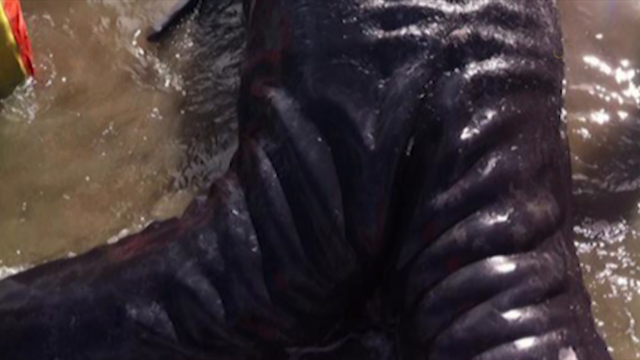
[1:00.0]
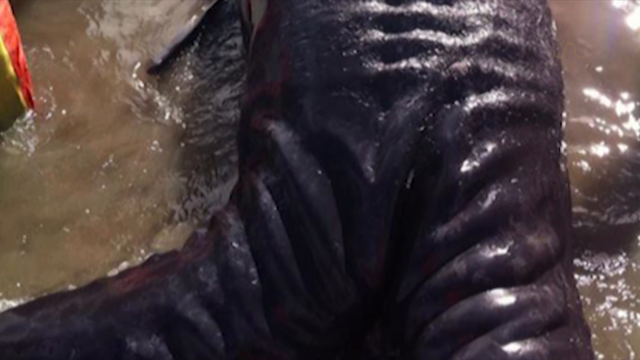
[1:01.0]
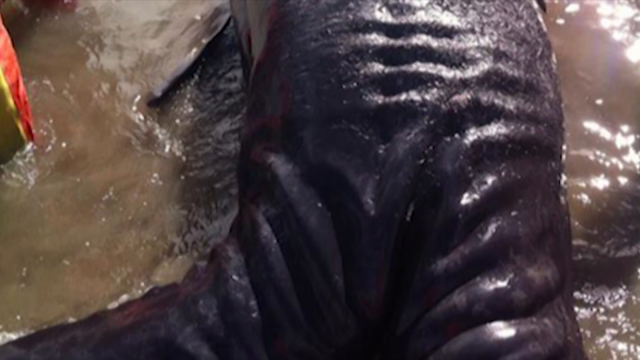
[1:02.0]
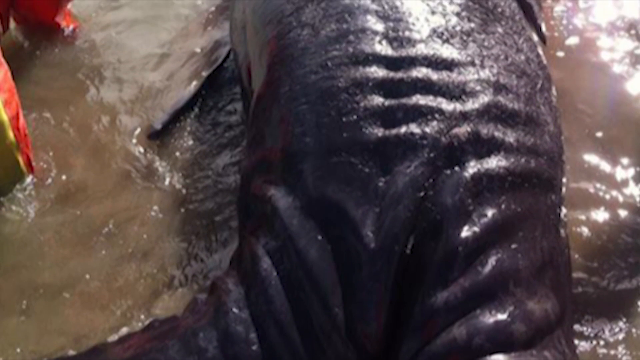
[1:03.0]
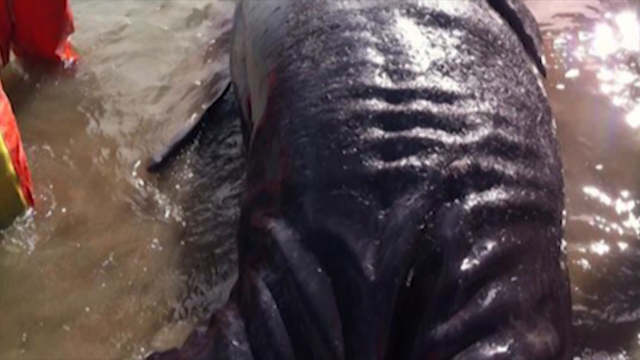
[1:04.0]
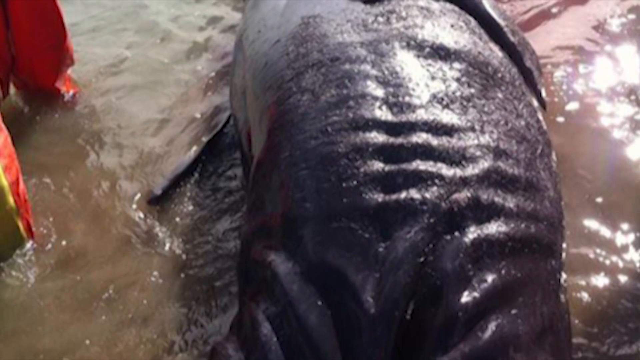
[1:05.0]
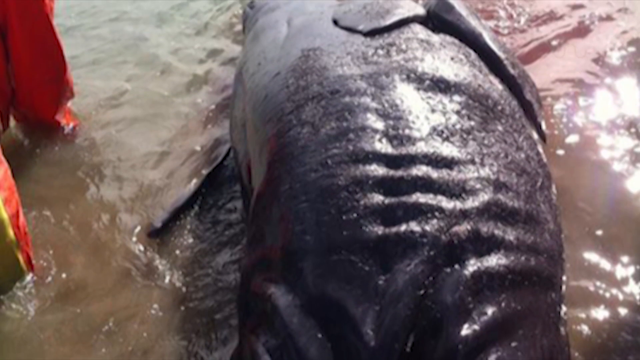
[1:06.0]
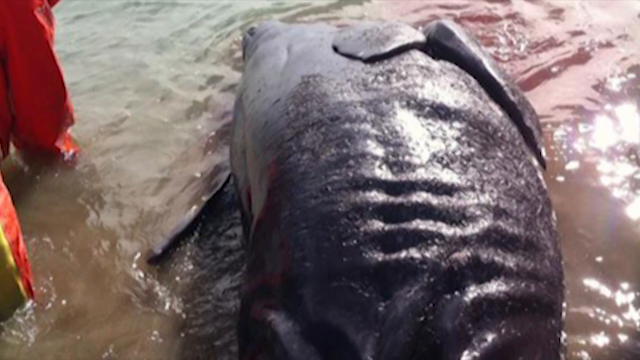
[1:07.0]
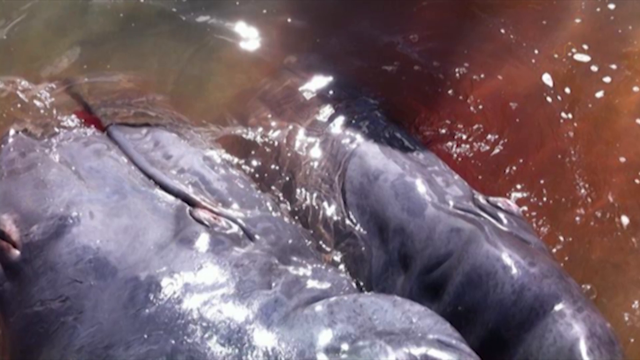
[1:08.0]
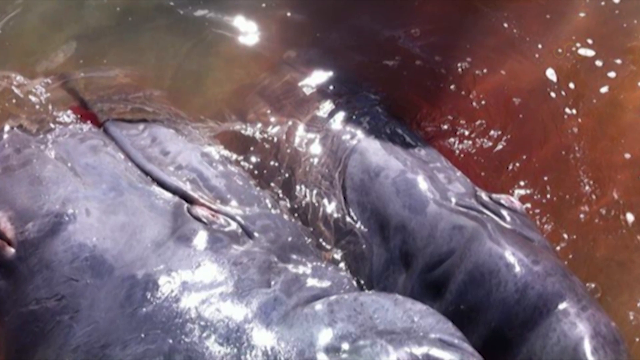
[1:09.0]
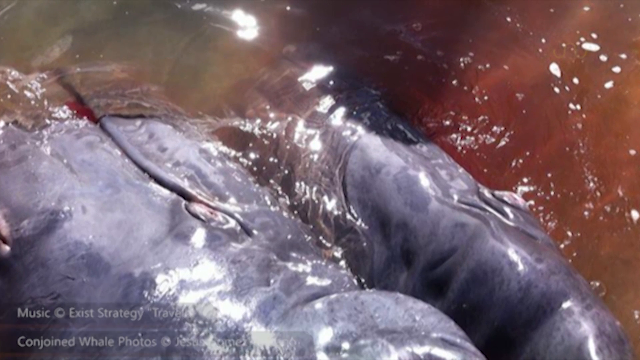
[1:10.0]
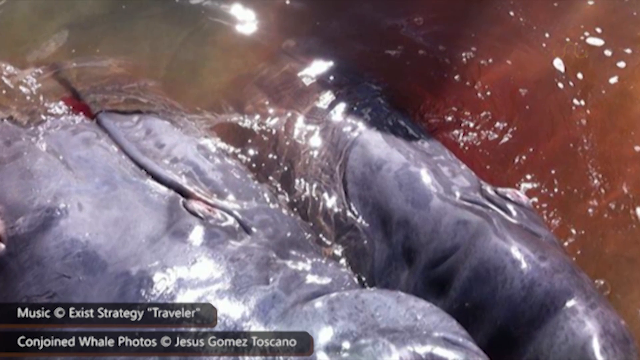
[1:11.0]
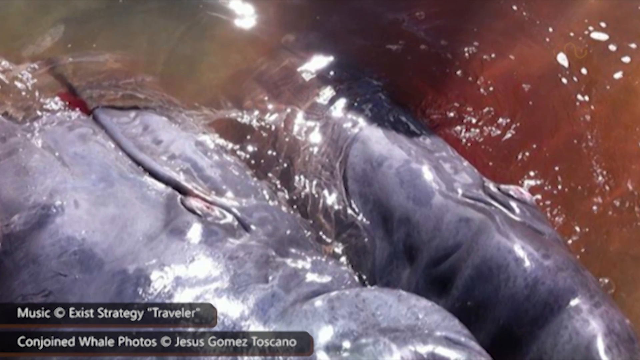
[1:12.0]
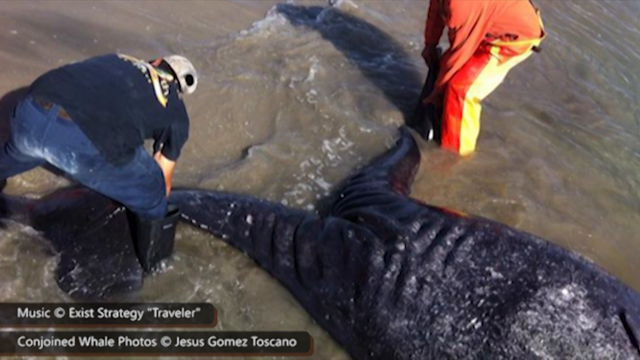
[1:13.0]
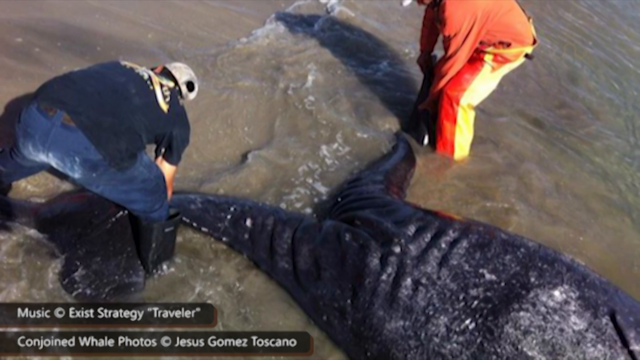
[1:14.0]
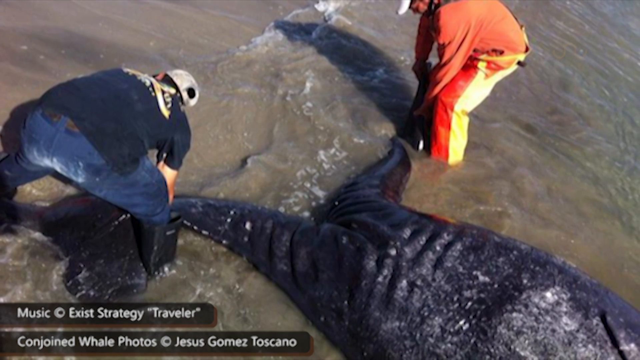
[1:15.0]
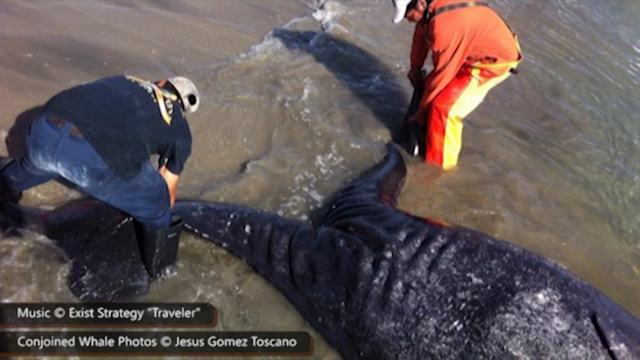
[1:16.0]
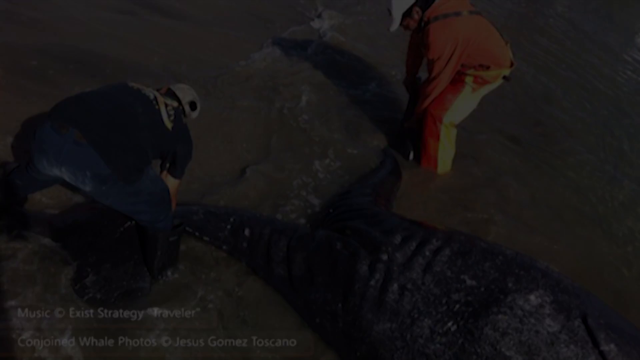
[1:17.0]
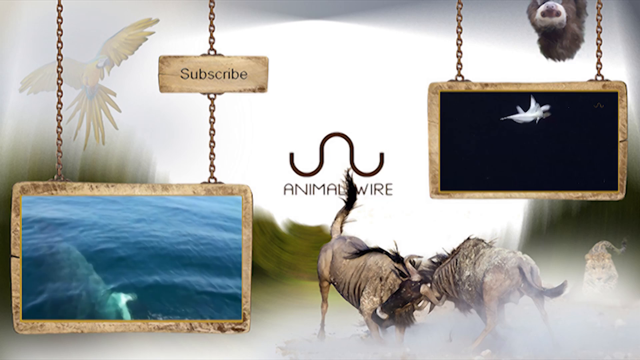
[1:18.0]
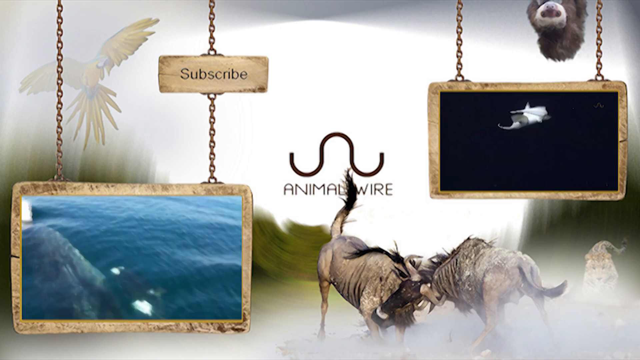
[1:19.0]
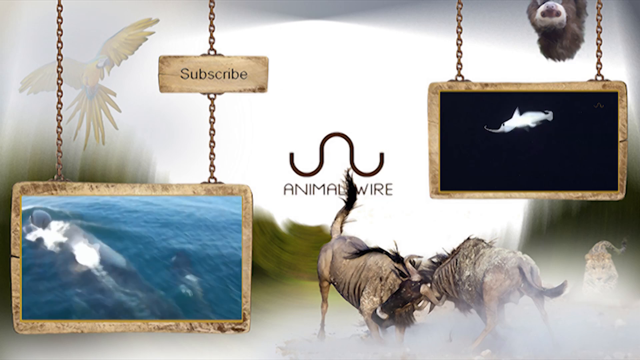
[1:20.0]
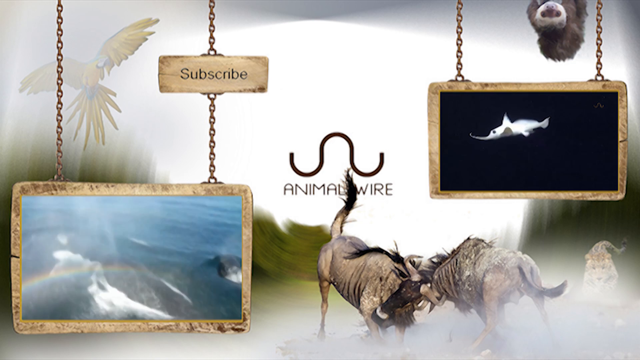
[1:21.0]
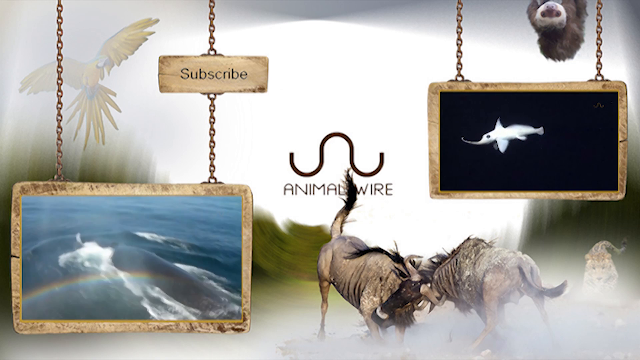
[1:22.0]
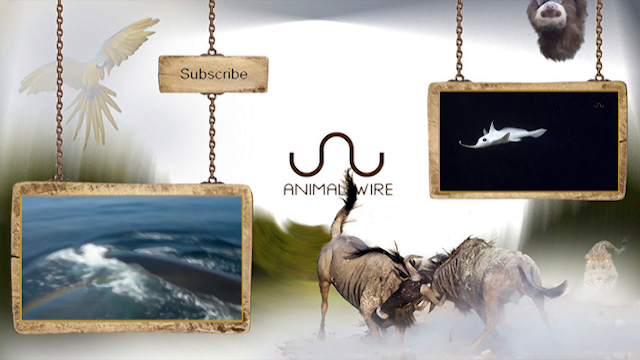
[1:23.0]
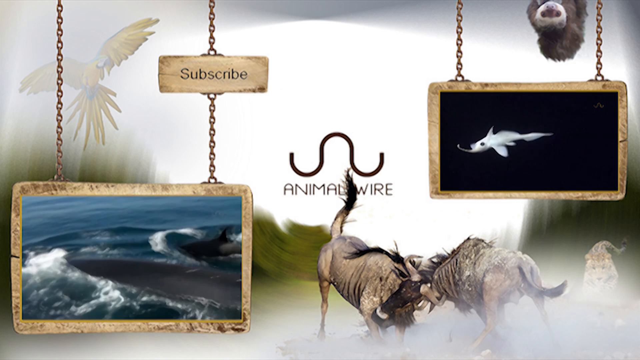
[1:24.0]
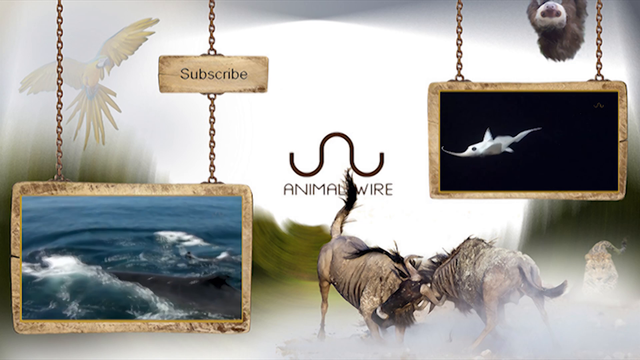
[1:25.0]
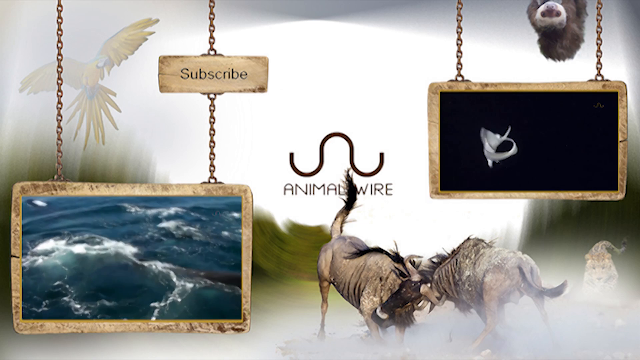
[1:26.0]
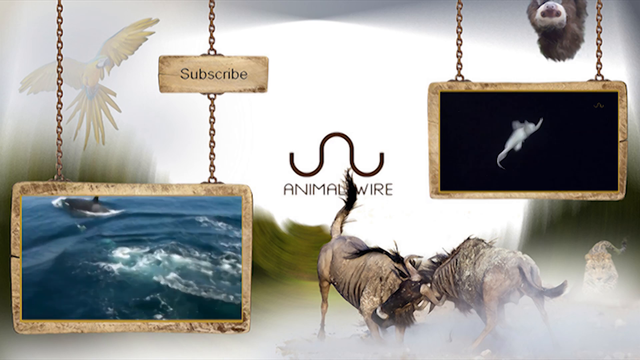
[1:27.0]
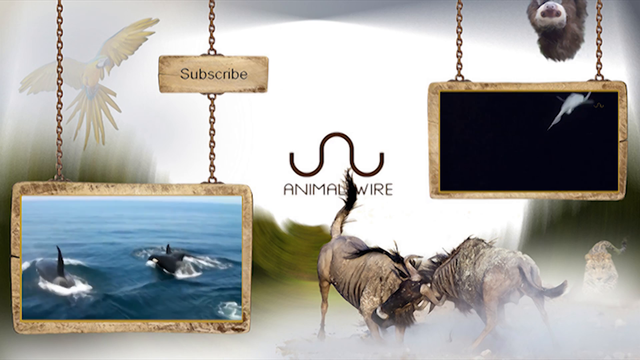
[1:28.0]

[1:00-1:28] The animal has very unusual, very wrinkly skin that almost looks like it has excess skin. It is in the water, and the lower part of its body appears to have two parts. Someone appears to be in the water beside it. Its color is almost jet black, maybe with some gray. The camera pans up over the body of the animal, and someone is standing in the water. The animal looks like it is halfway in and halfway out of the water, and there is blood in the water. Text appears on screen, and the animal is identified as a conjoined whale. At the end, "animal wire" and "subscribe" appear. There are two screens showing two different types of sea wildlife, and two mammals fighting each other with their heads. A bird flies to the left. In the center is a big white open area with what appear to be strokes that look like trees, and an animal that appears to be a sloth hangs from the very top.